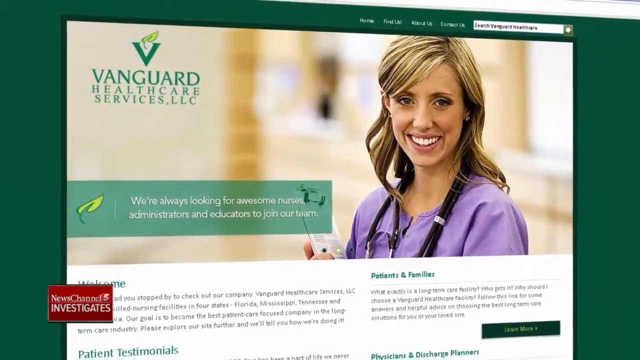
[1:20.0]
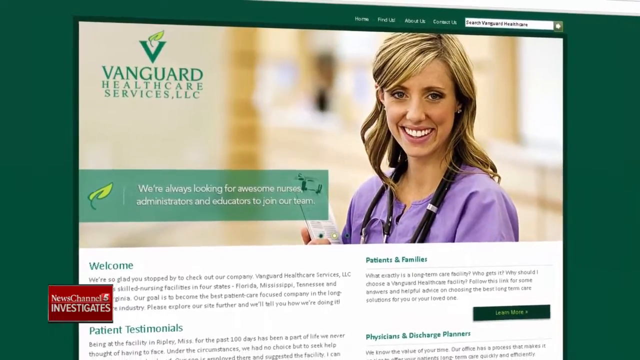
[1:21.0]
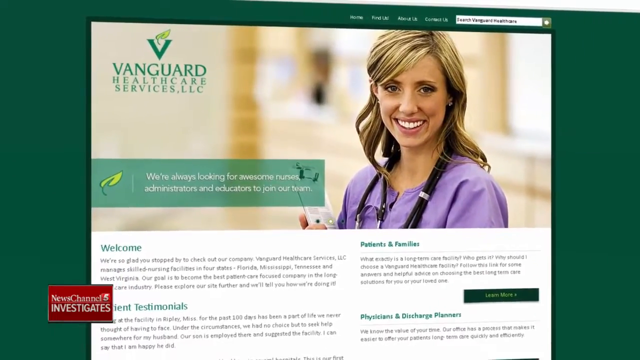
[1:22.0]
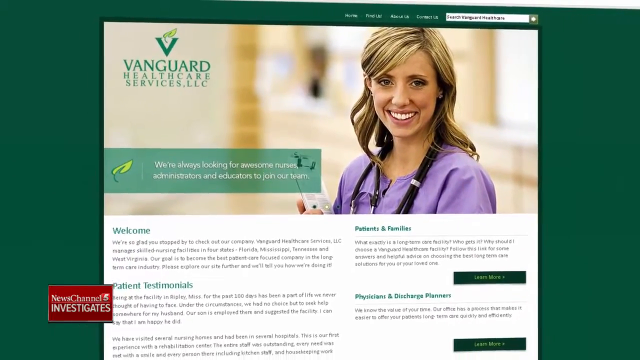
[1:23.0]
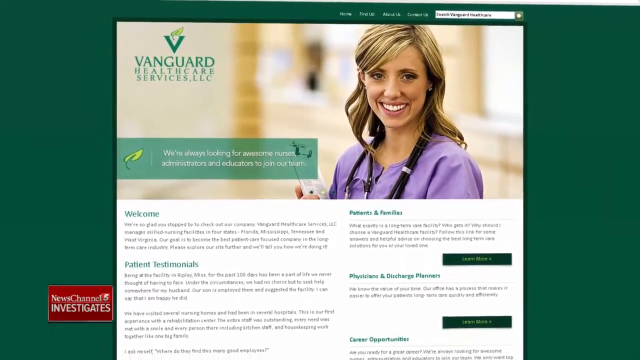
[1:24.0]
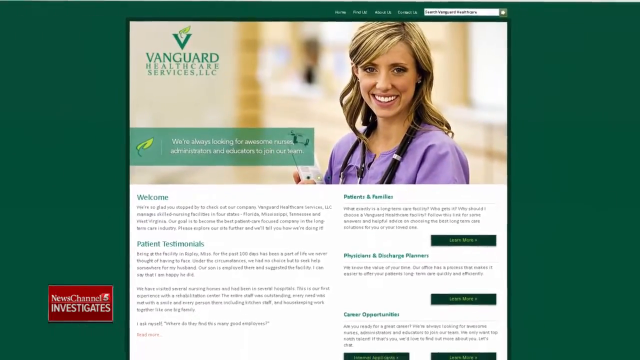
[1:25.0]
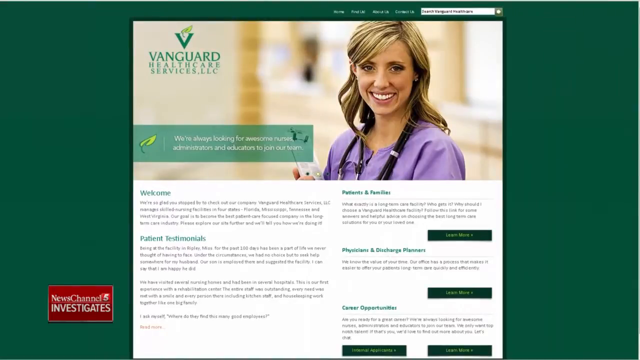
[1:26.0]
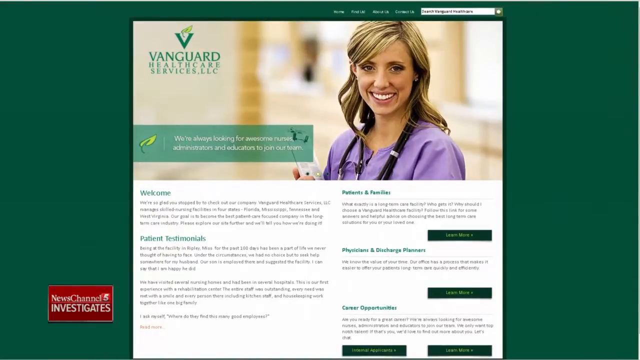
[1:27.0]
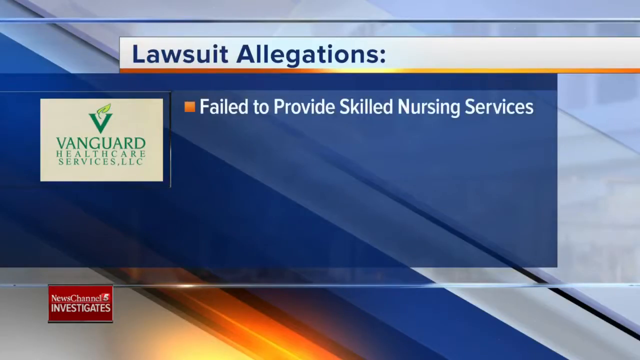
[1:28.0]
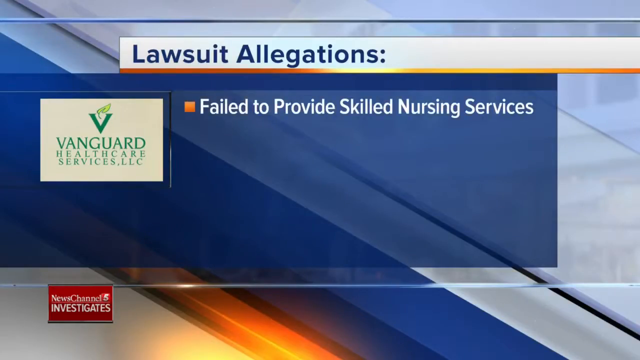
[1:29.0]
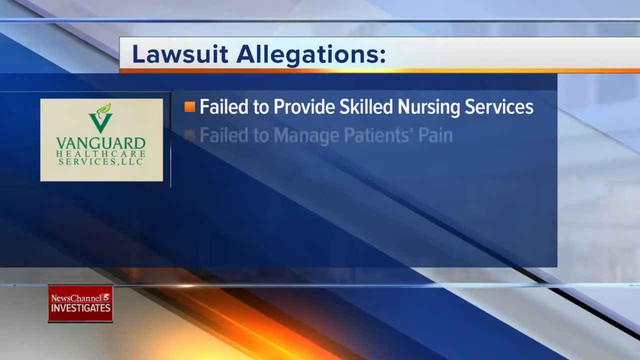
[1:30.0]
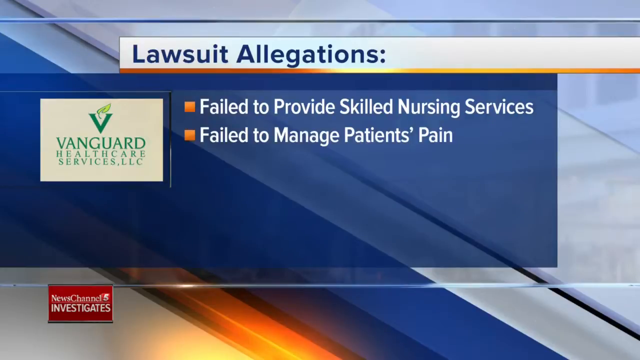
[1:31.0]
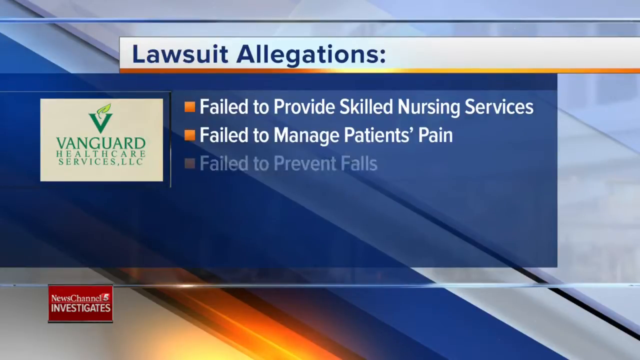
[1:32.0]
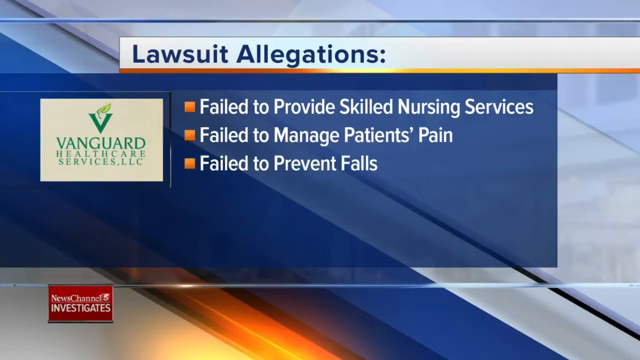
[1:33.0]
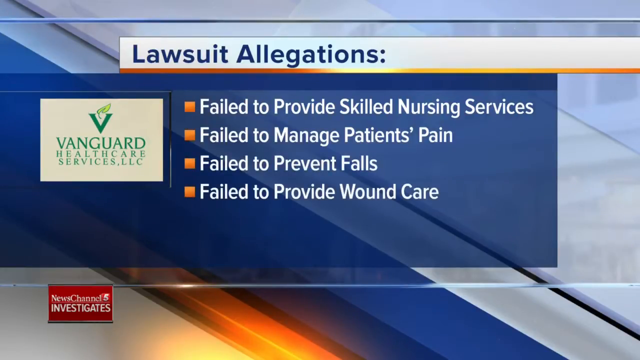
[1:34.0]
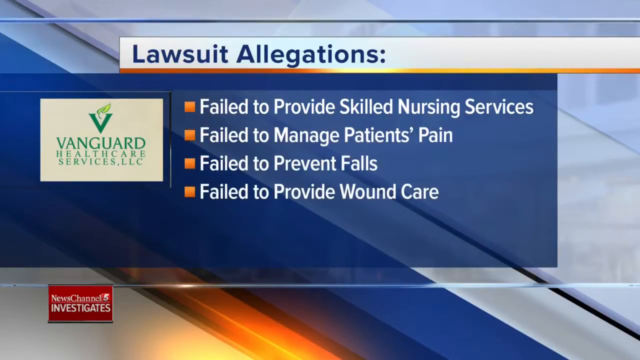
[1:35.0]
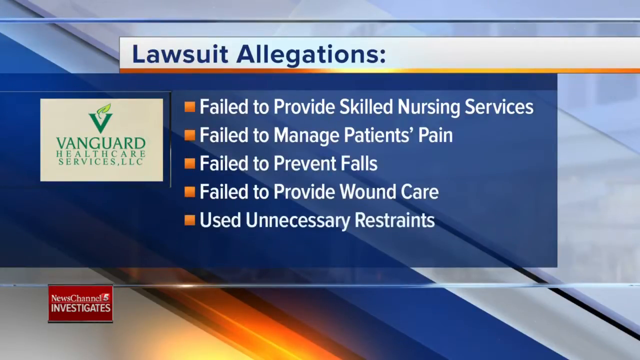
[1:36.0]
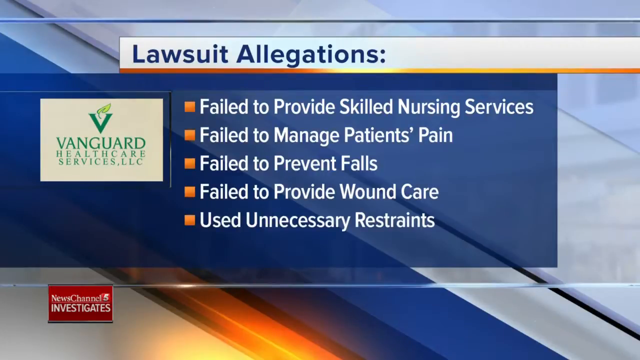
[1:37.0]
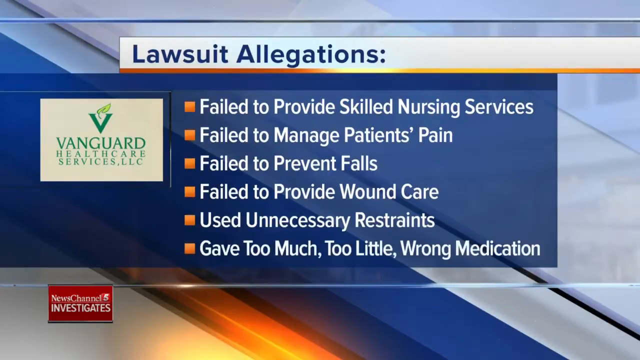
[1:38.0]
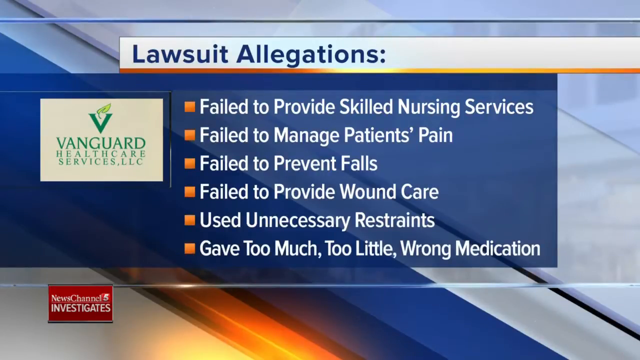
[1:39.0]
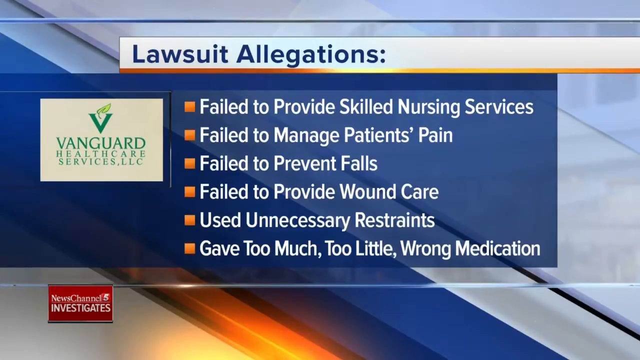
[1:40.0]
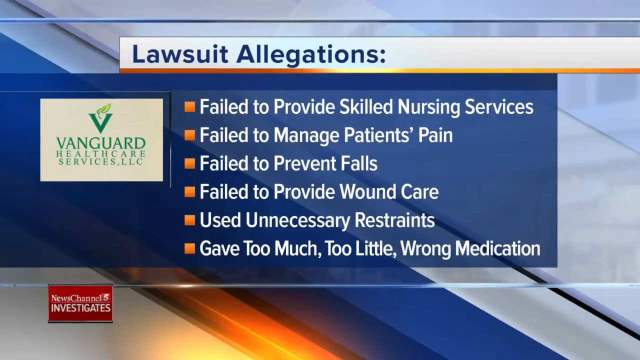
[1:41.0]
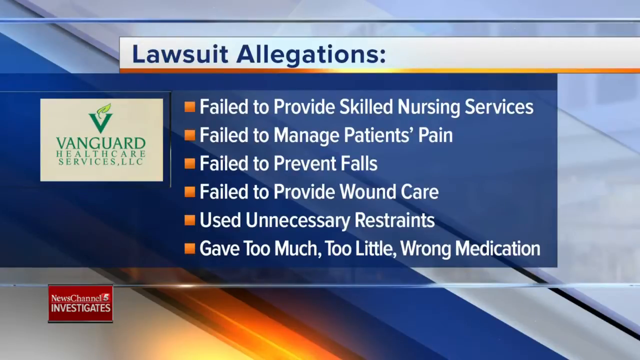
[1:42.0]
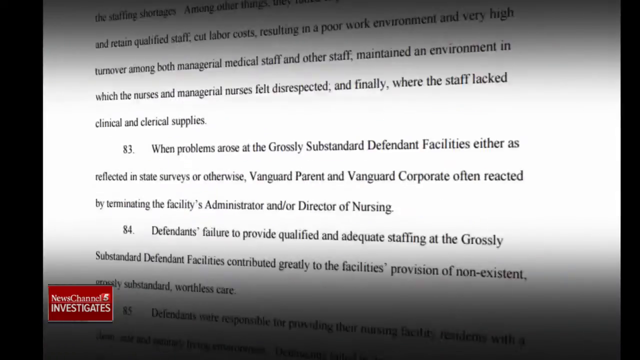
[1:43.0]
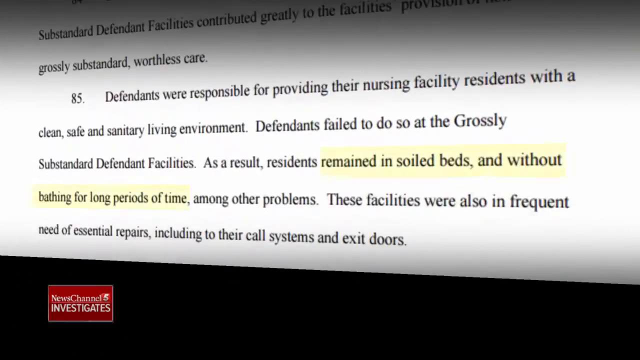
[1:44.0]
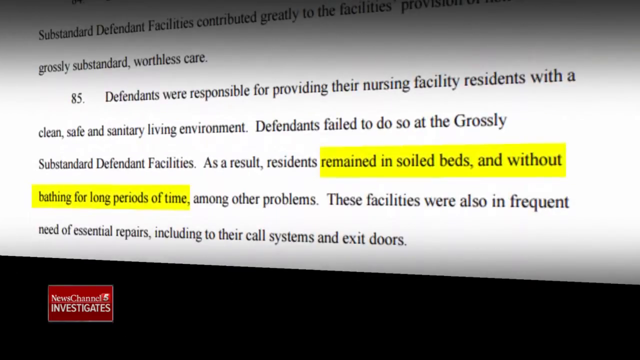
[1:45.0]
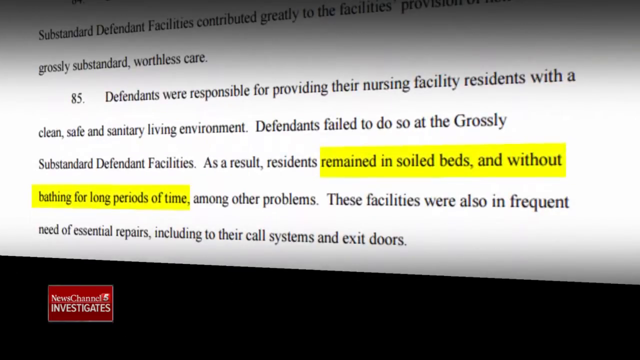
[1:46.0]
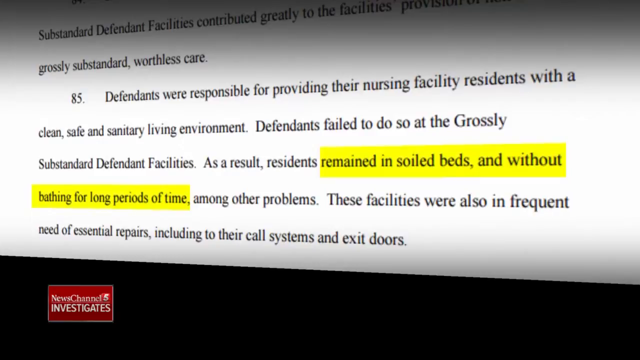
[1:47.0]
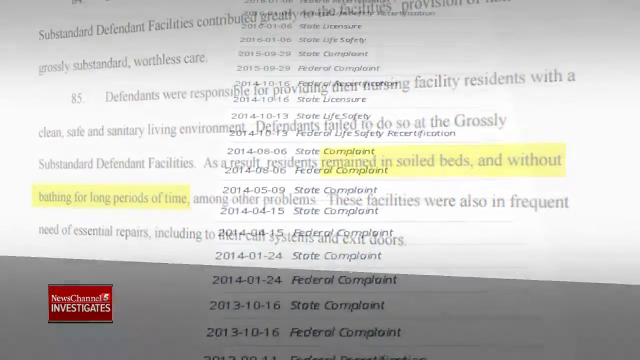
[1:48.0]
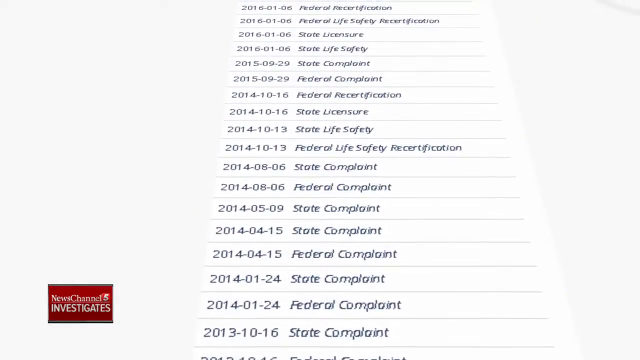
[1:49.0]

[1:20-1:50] The Vanguard Healthcare Services Limited Licensing webpage appears, with what seems to be a smiling nurse. Part of its text says "we're always looking for awesome nurses, administrators, and education to join our team." The camera pans out, showing a green background behind the white page. The news report moves to a page listing lawsuit allegations against Vanguard: they failed to provide skilled nursing services, failed to manage patients' pain, failed to prevent falls, failed to provide wound care, used unnecessary restraints, and gave too much, too little or wrong medications. Further court documents show that residents remained in soiled beds and without bathing for long periods of time, among other problems, and that the facilities were frequently in need of essential repairs, including their call systems and exit doors.